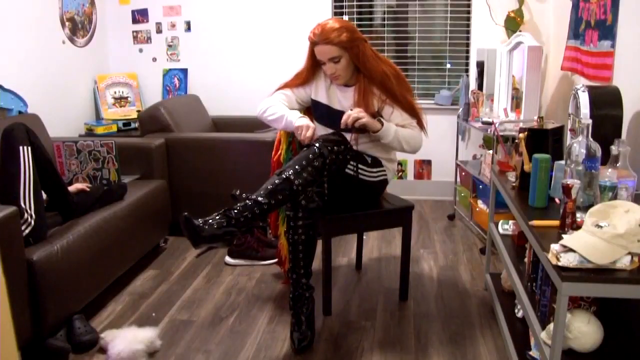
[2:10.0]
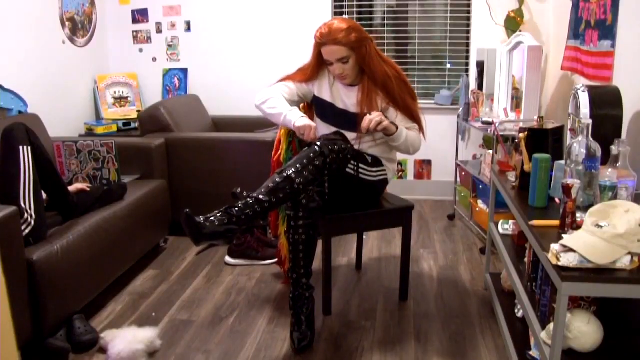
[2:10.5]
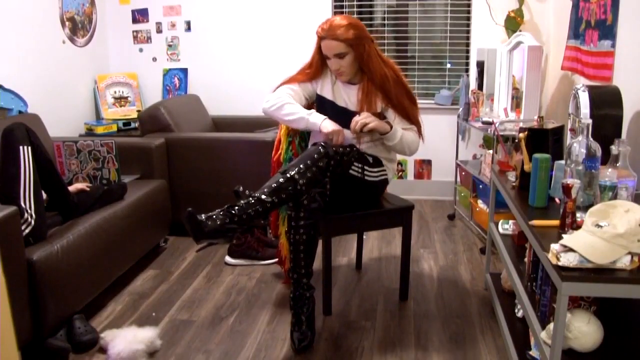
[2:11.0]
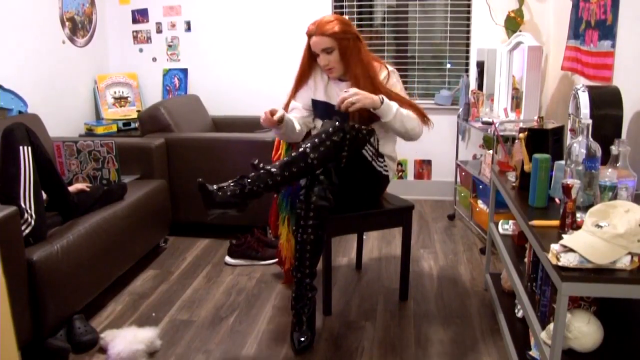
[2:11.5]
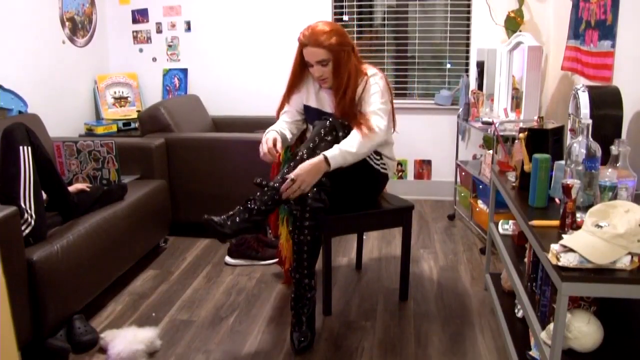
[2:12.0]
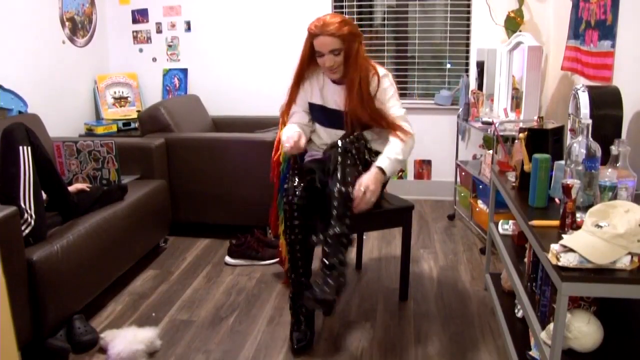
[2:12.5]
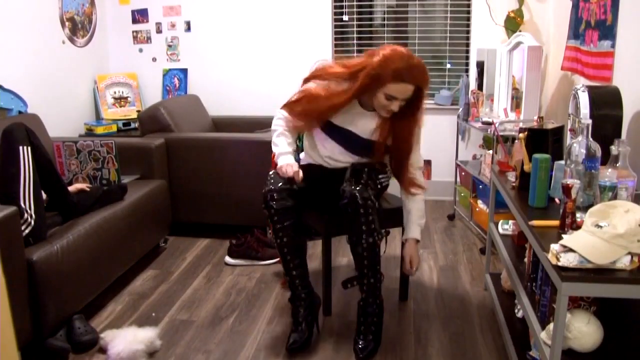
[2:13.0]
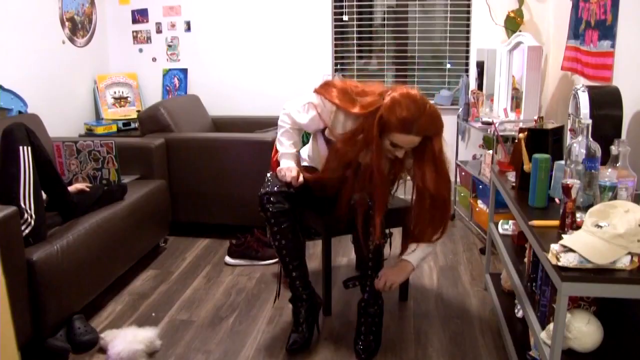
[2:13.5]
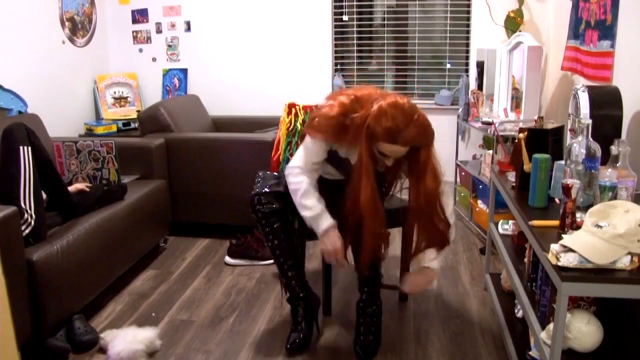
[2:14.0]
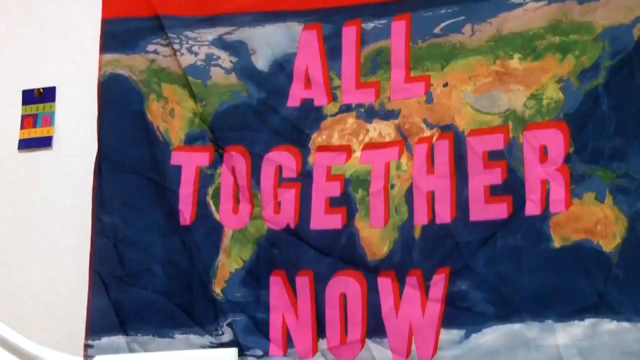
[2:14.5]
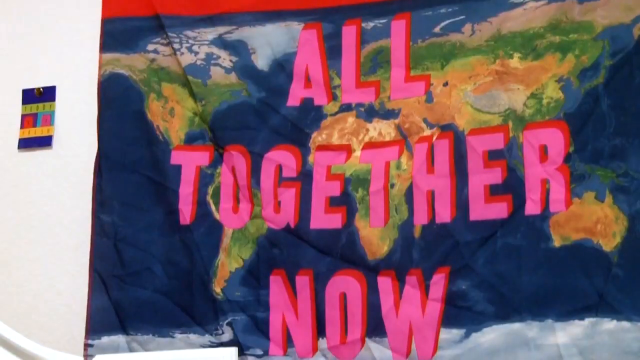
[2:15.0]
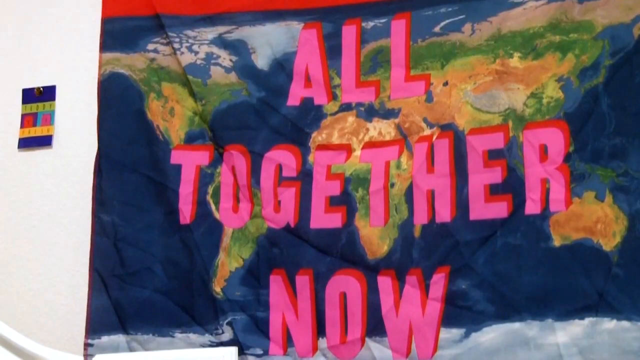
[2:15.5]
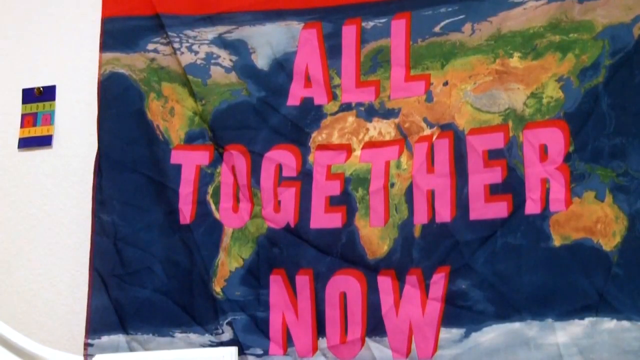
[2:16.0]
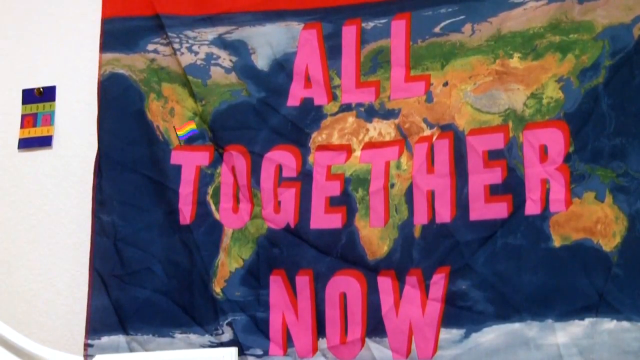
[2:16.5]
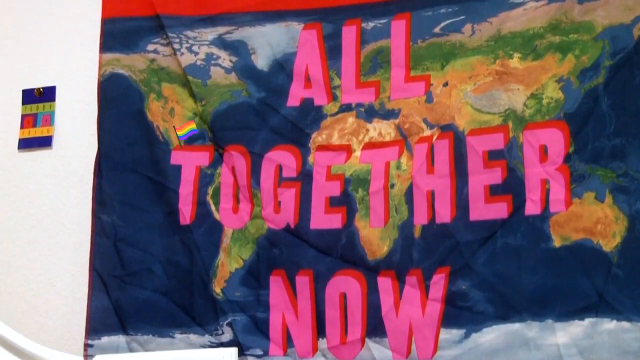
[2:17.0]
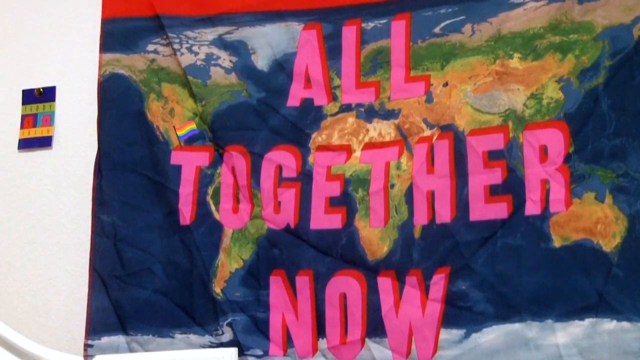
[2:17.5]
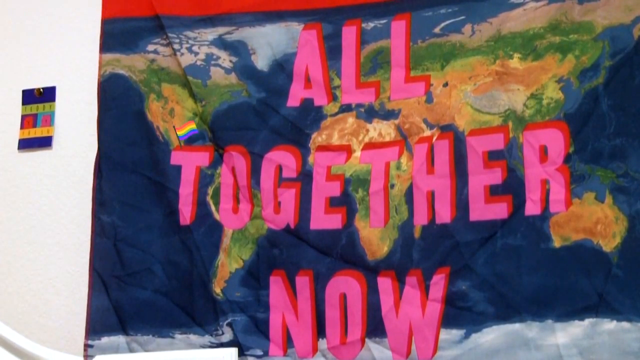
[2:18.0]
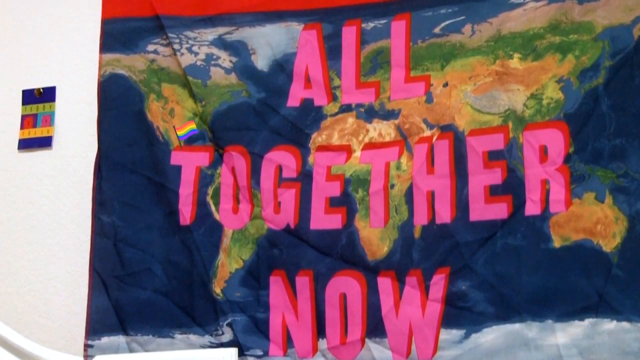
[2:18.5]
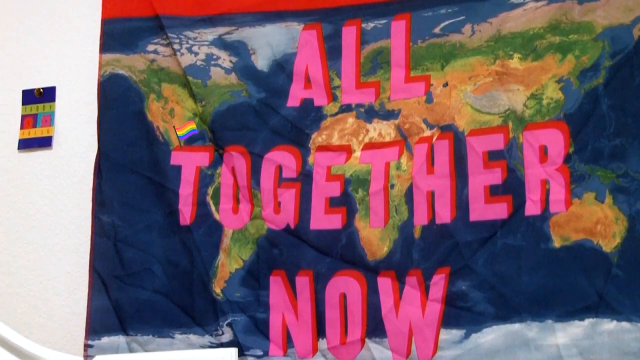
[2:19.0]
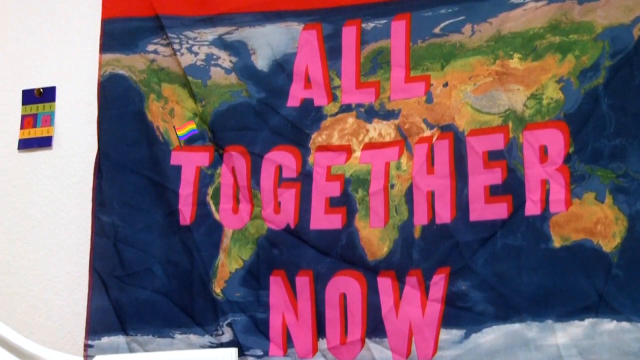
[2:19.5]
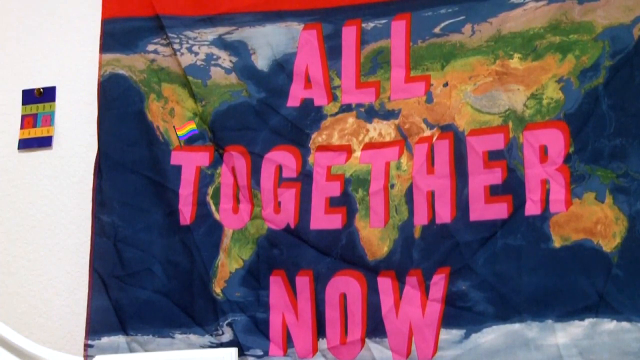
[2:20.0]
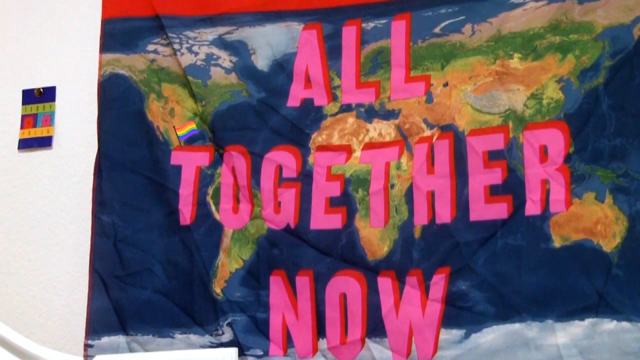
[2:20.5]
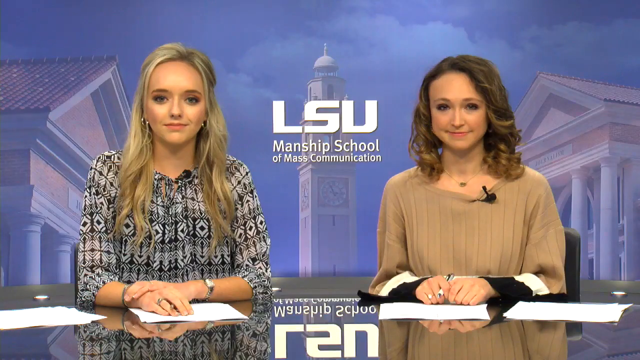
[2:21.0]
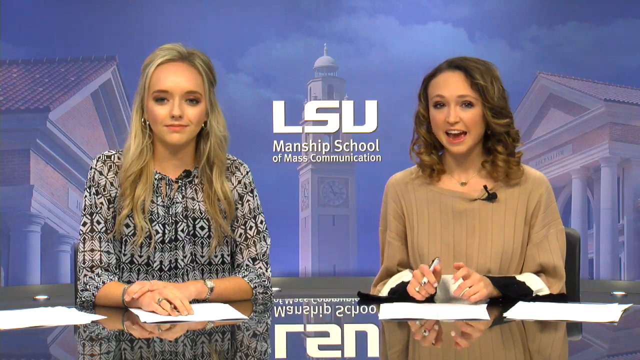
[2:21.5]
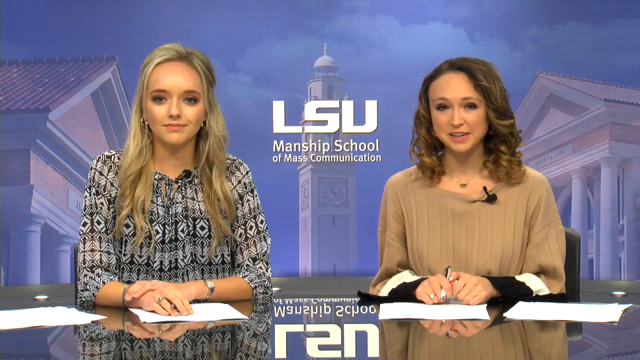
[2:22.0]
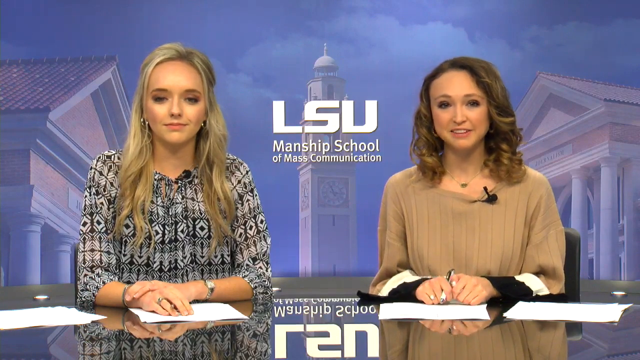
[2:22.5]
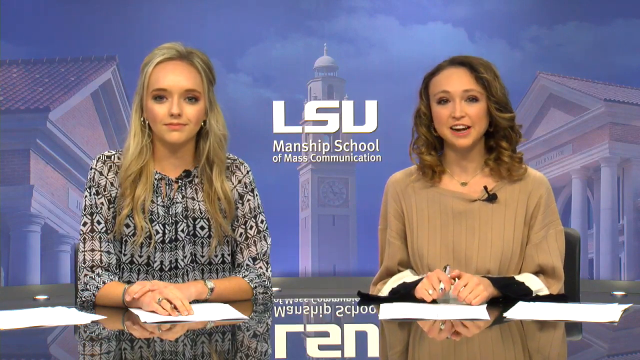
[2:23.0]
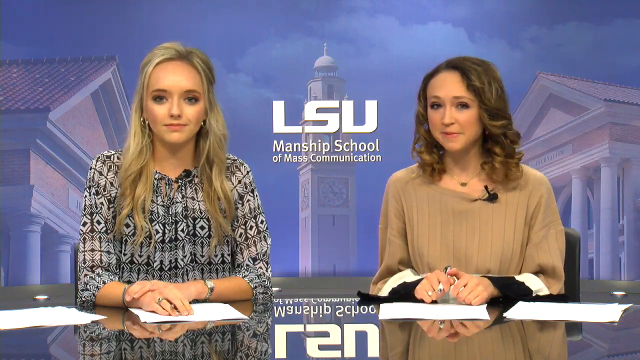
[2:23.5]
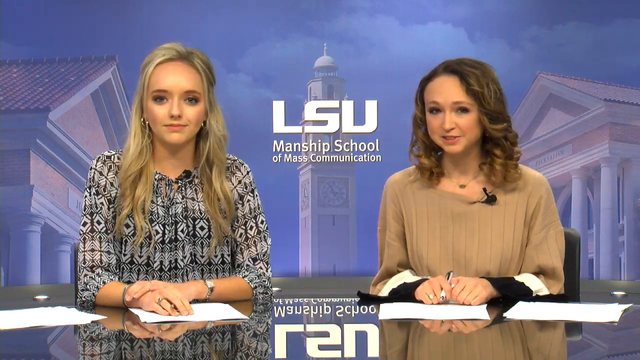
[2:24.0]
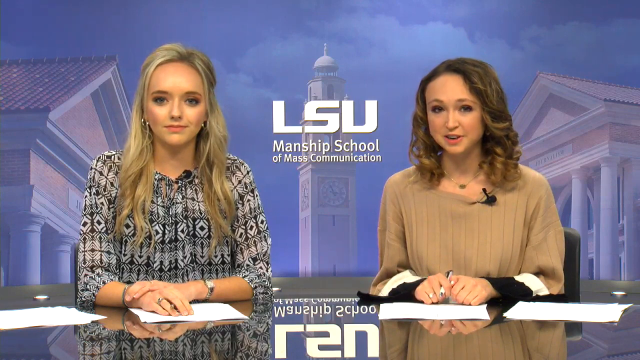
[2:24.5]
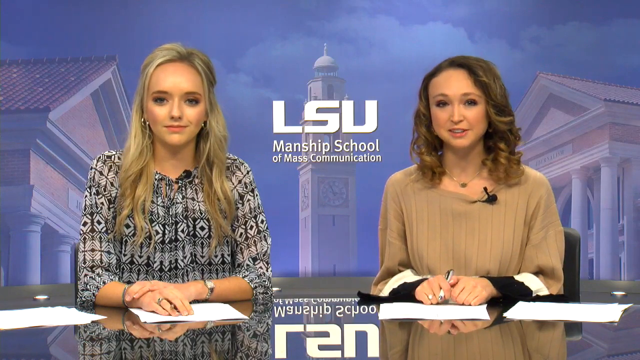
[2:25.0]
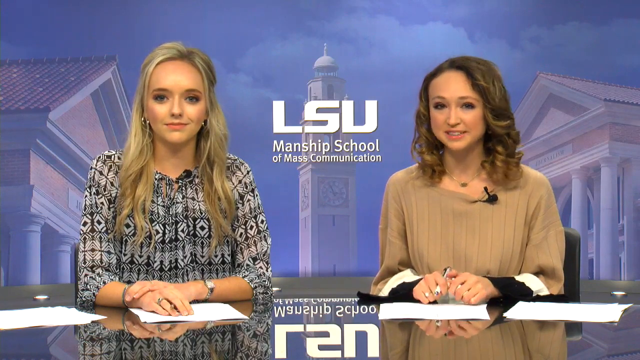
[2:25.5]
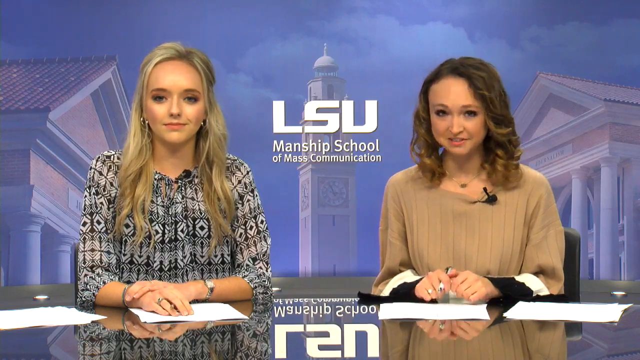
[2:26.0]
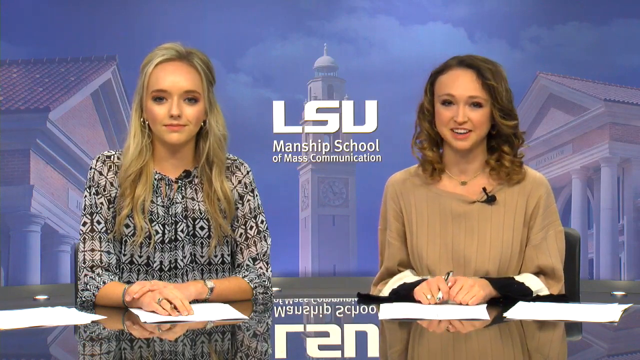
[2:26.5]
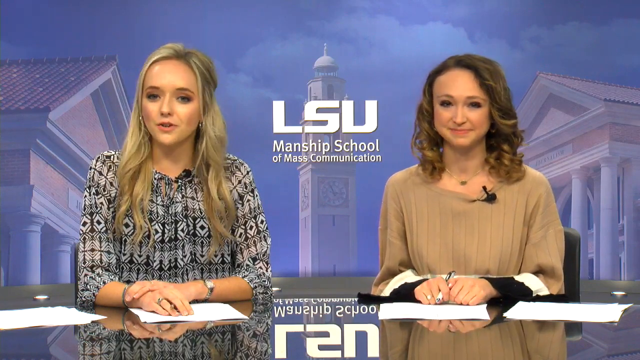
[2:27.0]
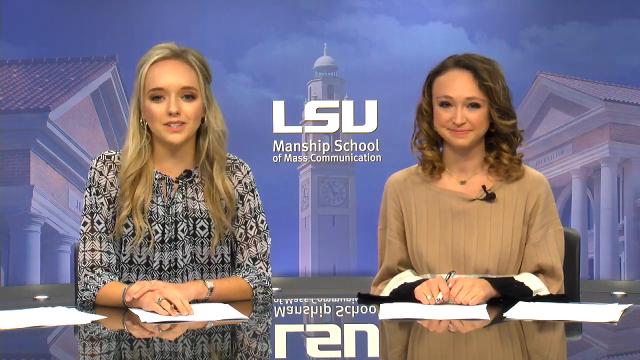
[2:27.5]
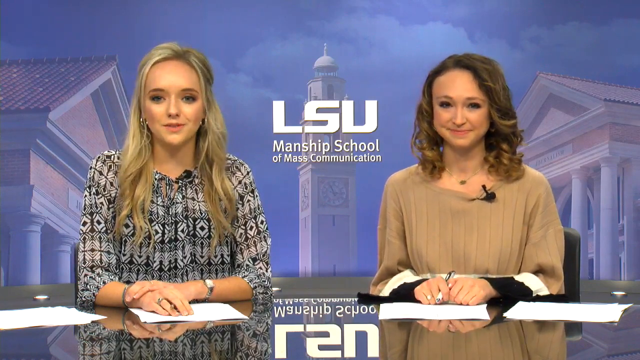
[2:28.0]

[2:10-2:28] The person who was on the couch now sits on a black stool with their left leg crossed over their right, seeming to adjust the long black boots they are wearing. A close-up shows the picture seen on the wall: a banner with a picture of the world and, over it, "all together now" in pink bold writing, with a trans flag coming out of the T. The video returns to the newsroom, where there are two news anchors: a blonde woman on the left and a darker-haired woman on the right. The one on the right talks, seeming very happy and moving her hands up and down a lot. Behind the anchors is a blue colour with a building on either side, and in the middle, in big white capital letters, is the text "LSU, a manship school of mass communication".